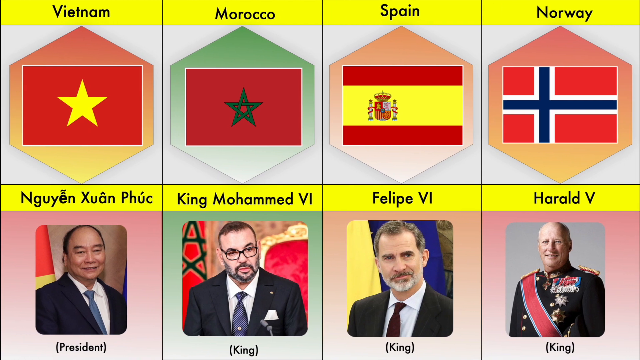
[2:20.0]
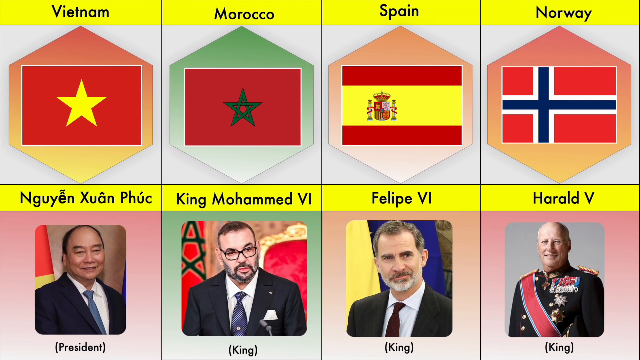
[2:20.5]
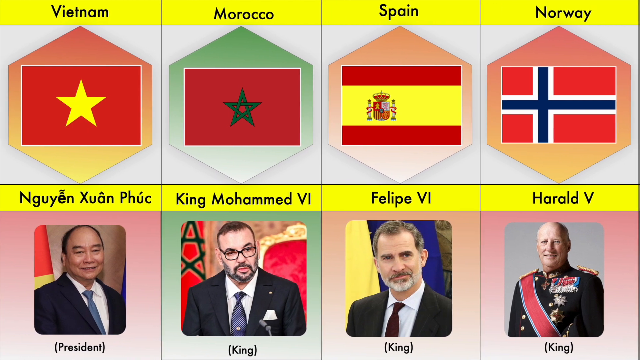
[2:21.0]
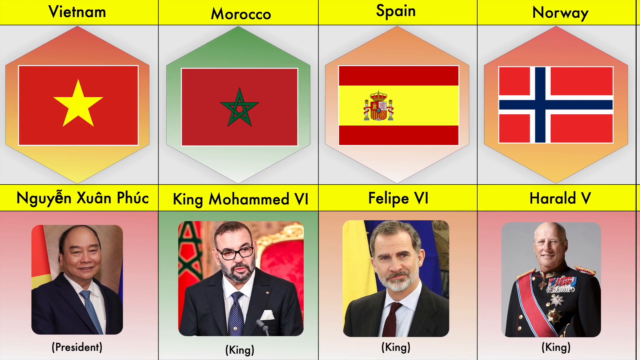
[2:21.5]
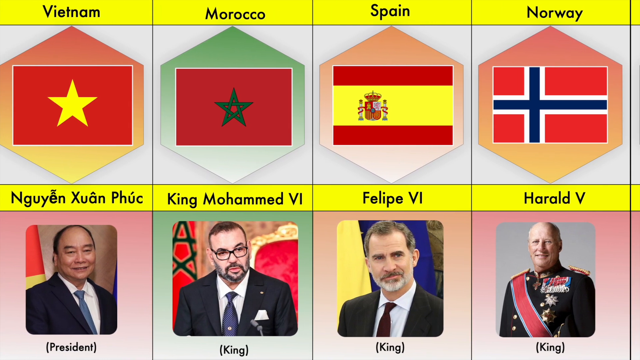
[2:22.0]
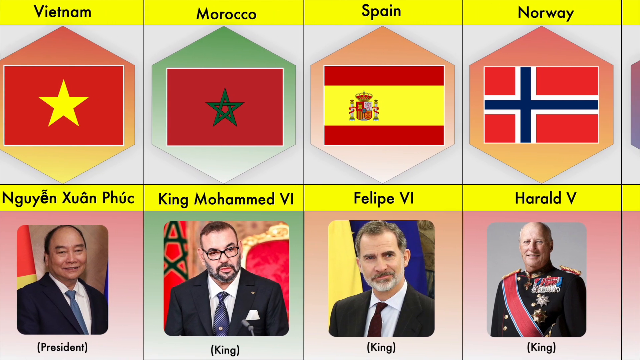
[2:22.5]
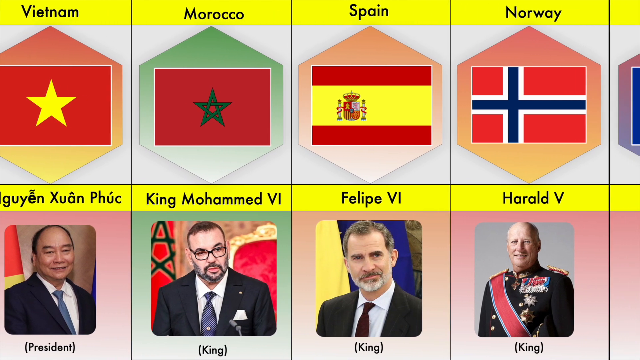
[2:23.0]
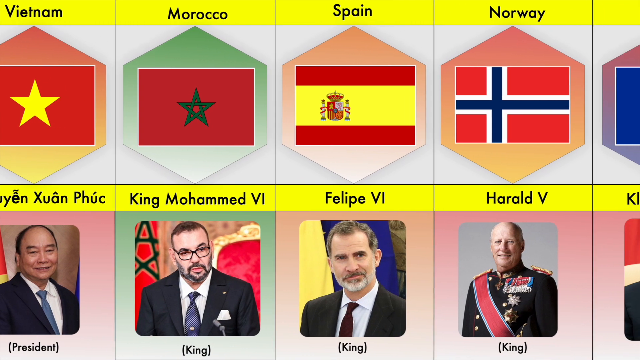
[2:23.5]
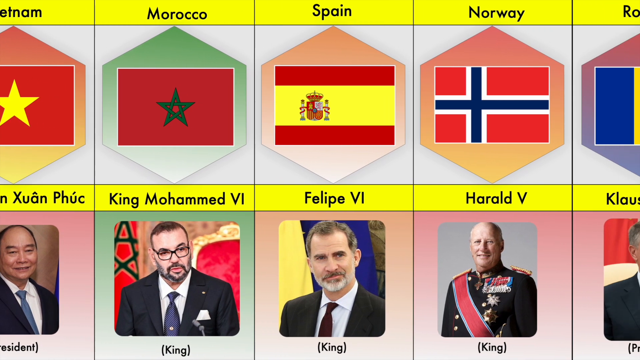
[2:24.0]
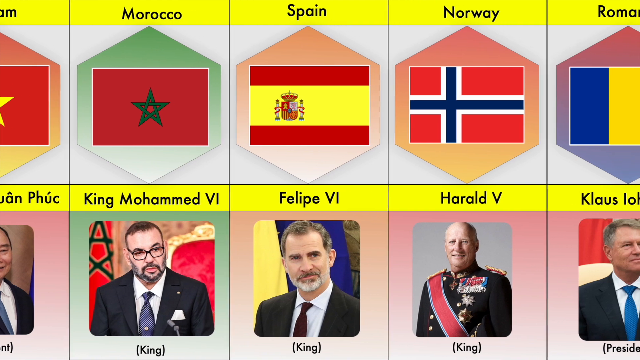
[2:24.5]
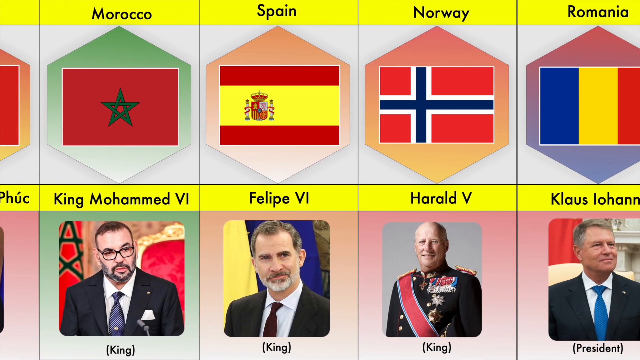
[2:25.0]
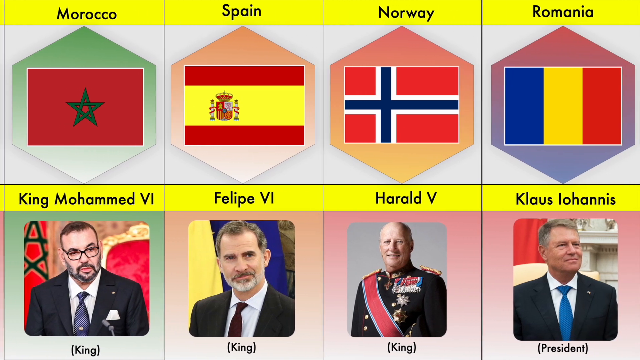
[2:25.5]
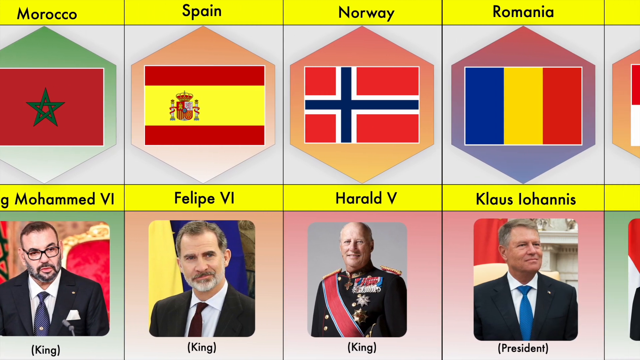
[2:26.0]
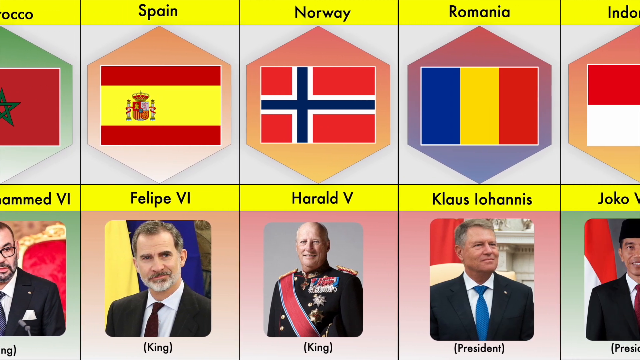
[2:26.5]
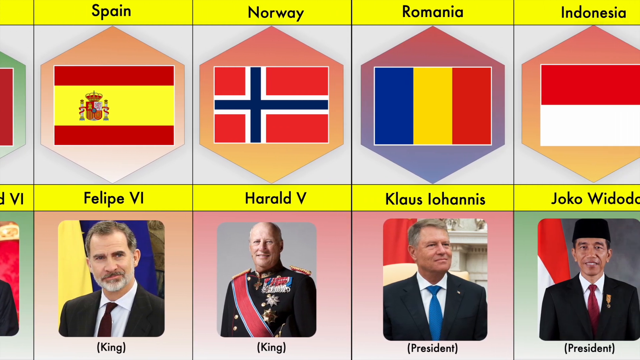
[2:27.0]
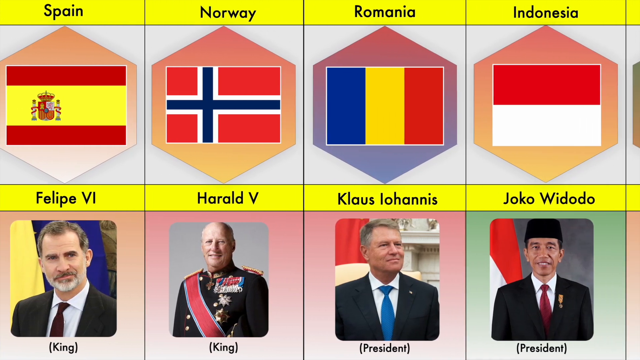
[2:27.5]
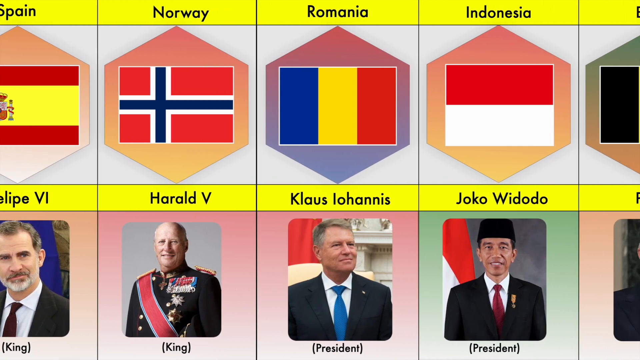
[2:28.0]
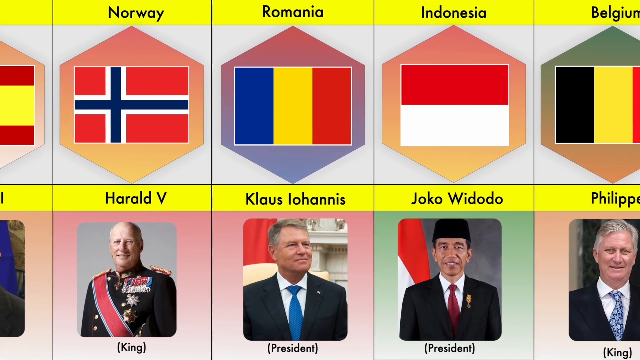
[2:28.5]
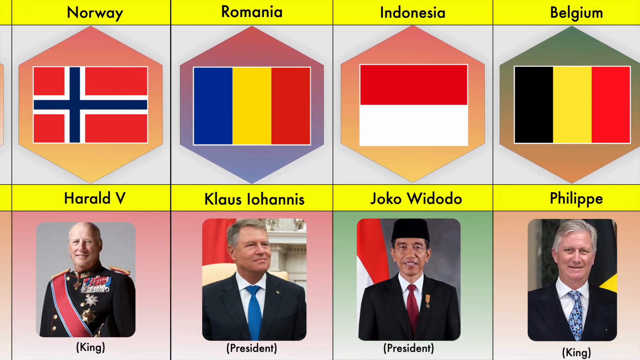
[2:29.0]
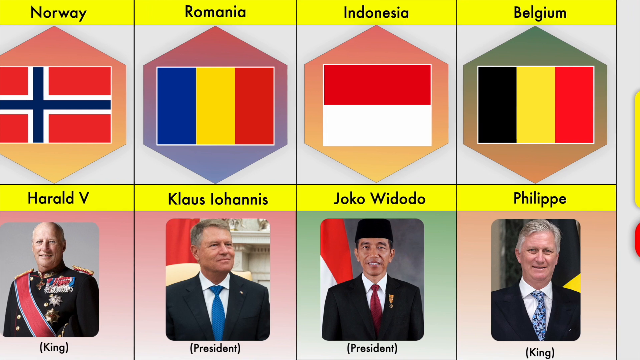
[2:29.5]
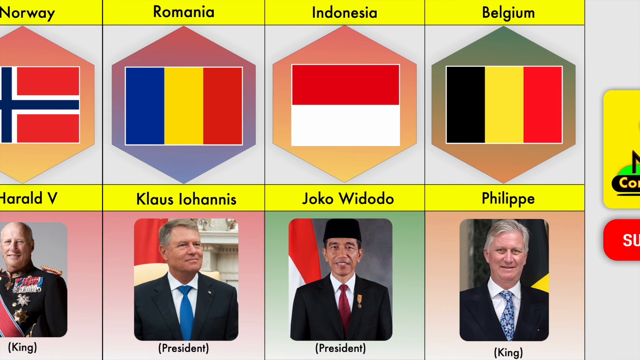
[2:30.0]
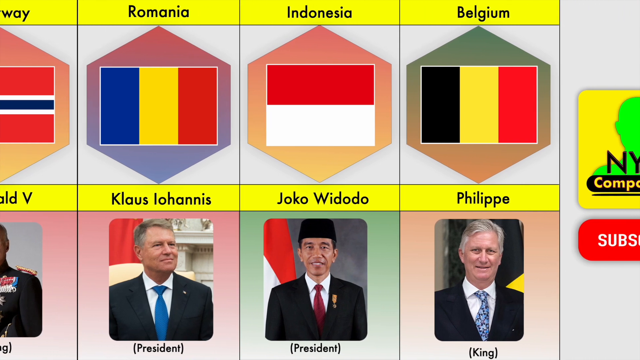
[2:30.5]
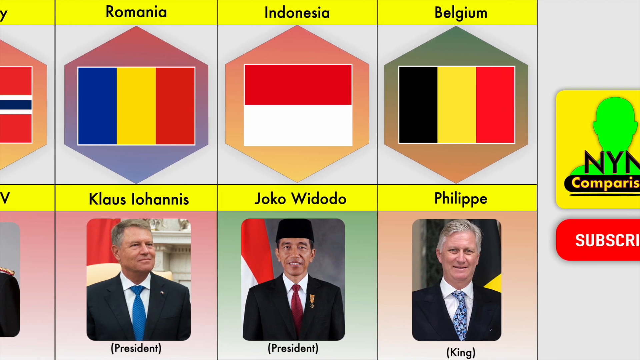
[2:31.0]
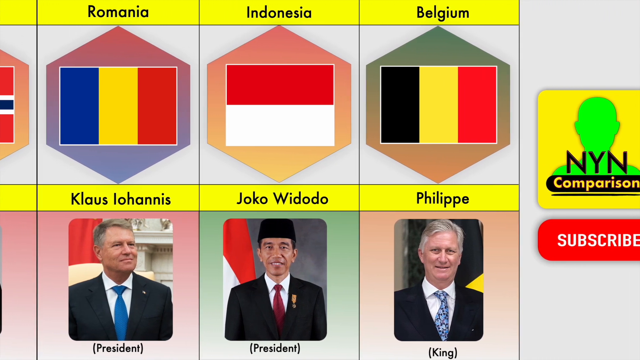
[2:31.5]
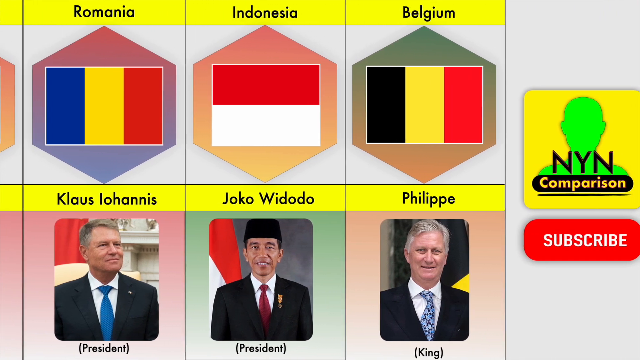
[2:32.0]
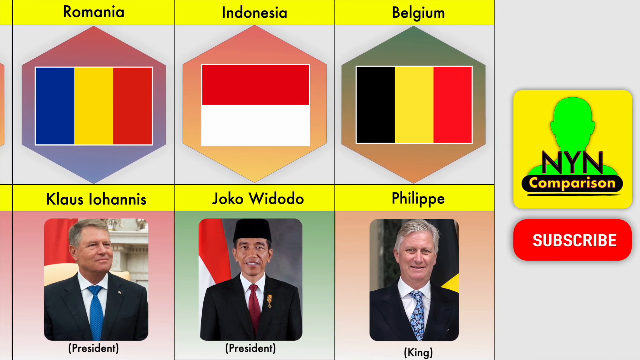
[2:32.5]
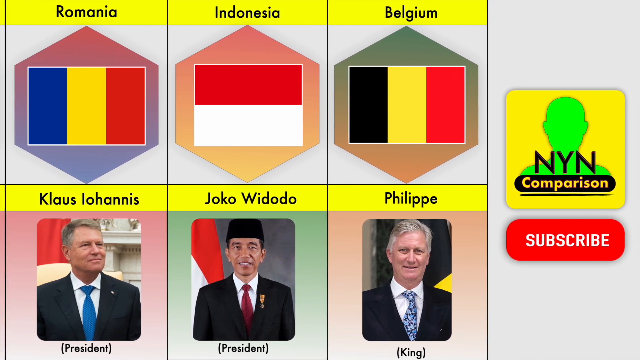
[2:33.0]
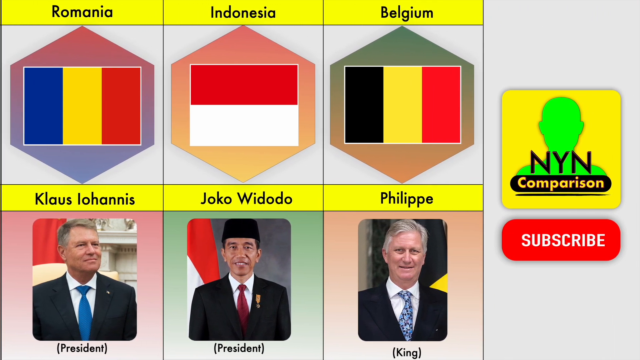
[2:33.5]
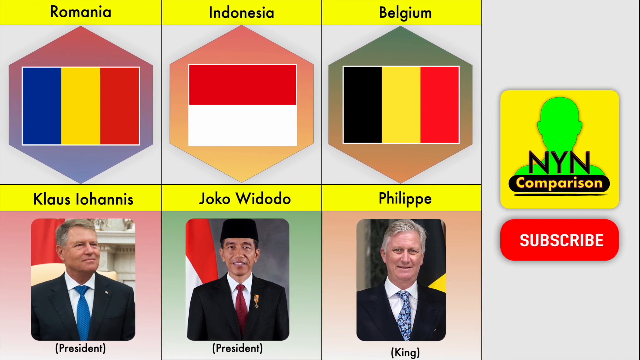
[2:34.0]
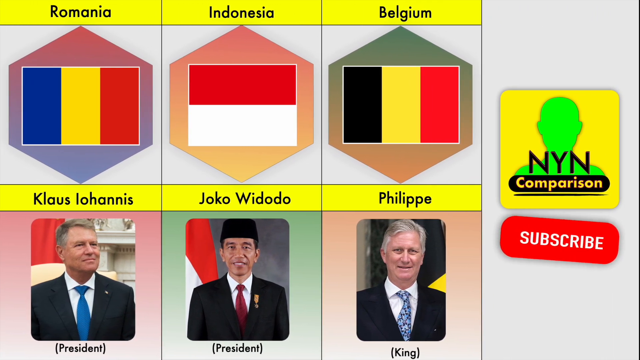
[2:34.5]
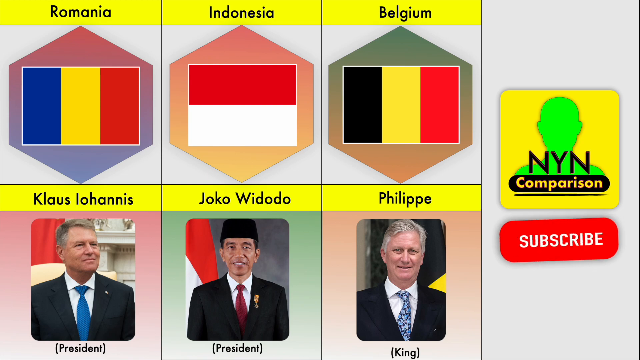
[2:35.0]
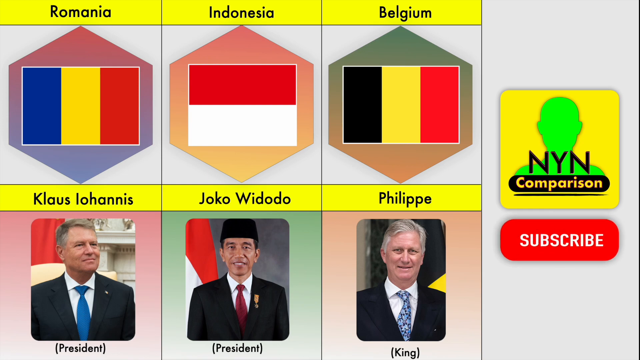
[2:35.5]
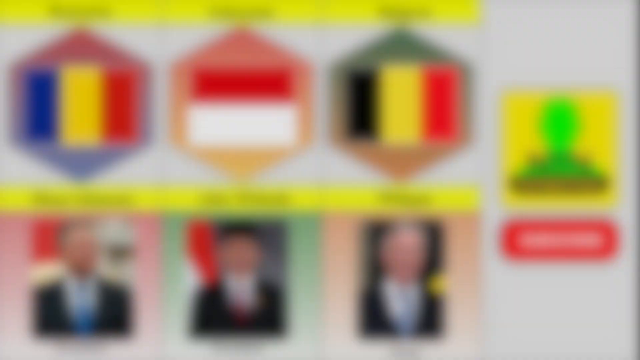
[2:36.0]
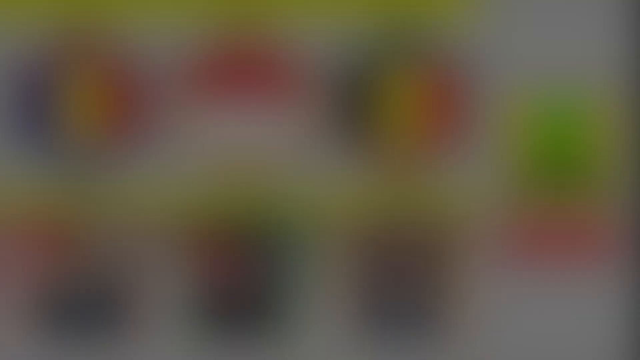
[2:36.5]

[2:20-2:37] People representing various countries from different parts of the world are shown at the bottom of the screen, with countries entering and exiting the screen. On the far right side of the screen, text reads "NYN Comparison Subscribe".